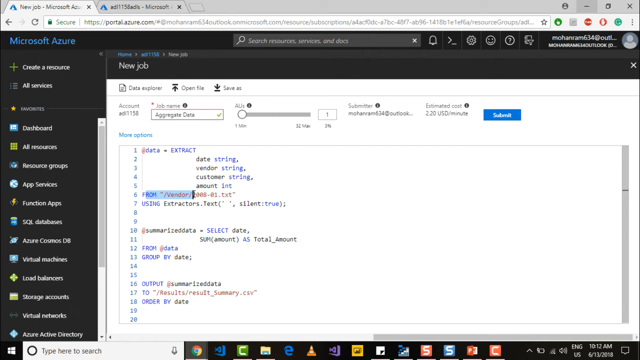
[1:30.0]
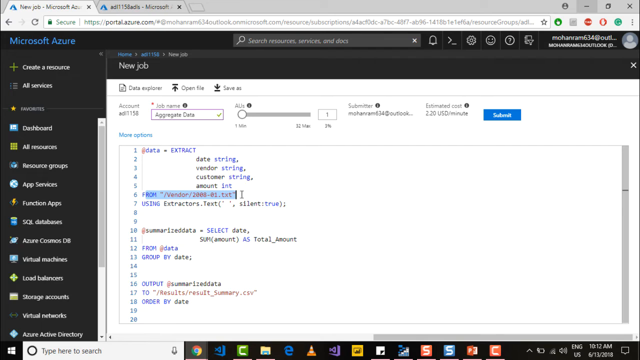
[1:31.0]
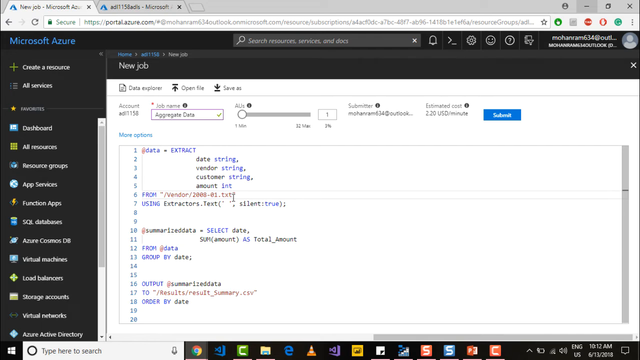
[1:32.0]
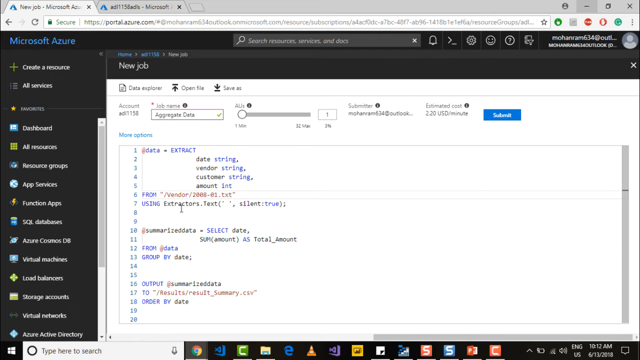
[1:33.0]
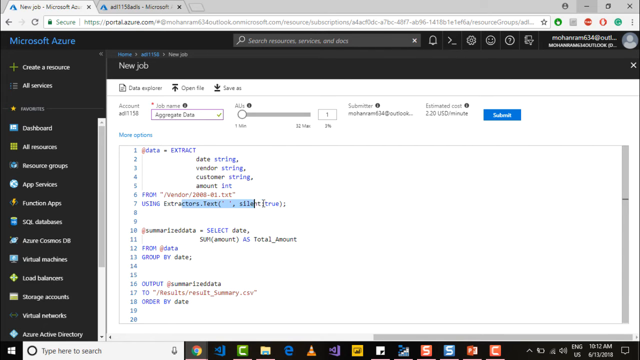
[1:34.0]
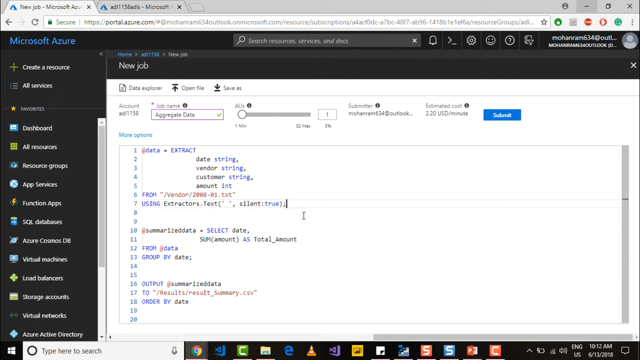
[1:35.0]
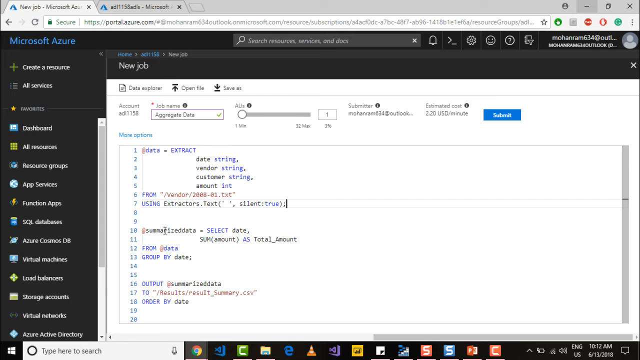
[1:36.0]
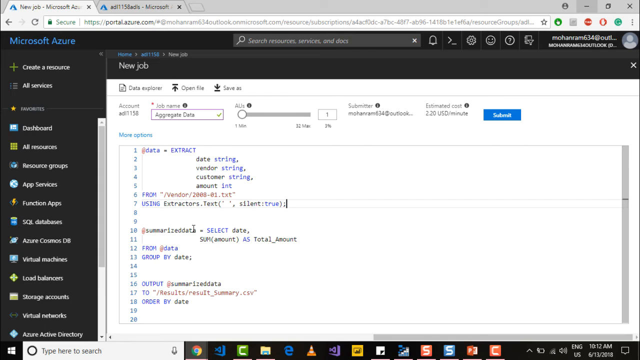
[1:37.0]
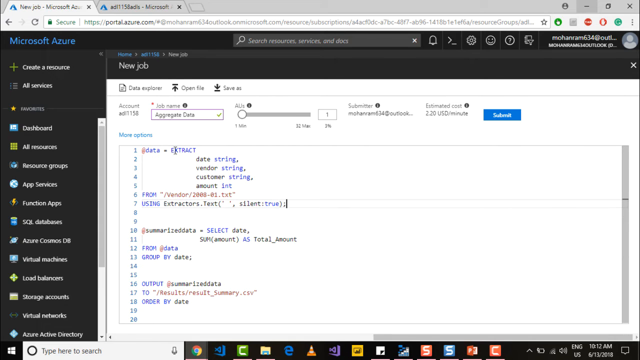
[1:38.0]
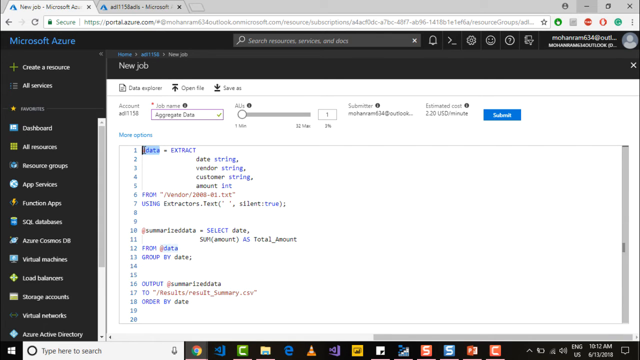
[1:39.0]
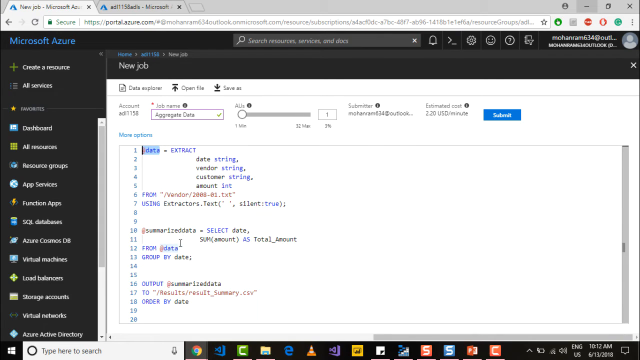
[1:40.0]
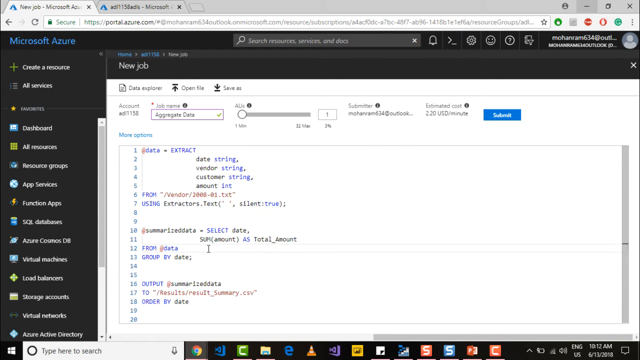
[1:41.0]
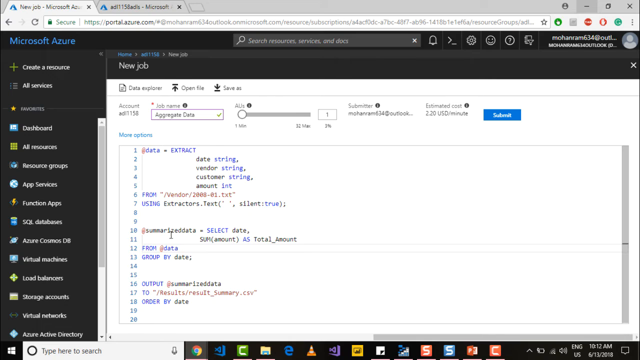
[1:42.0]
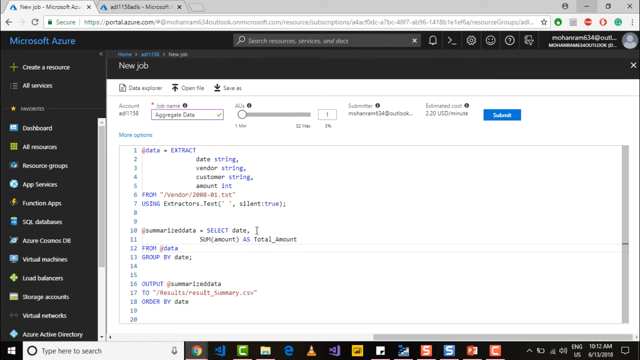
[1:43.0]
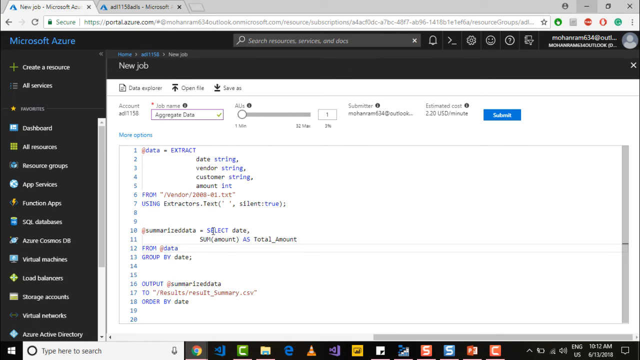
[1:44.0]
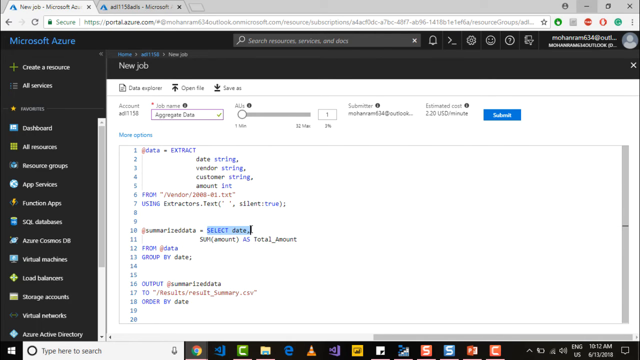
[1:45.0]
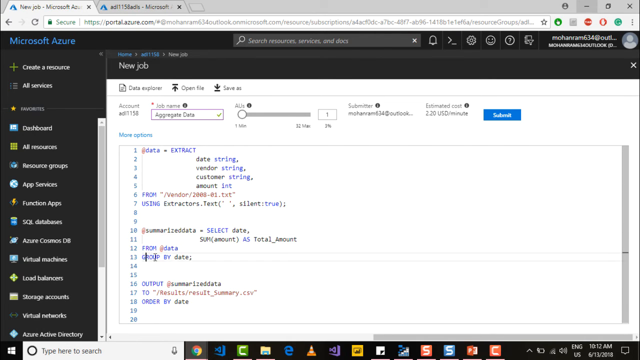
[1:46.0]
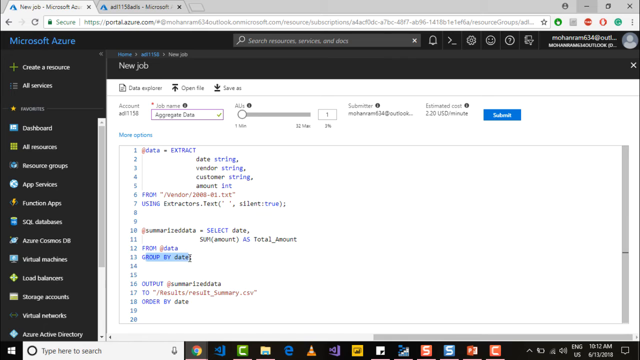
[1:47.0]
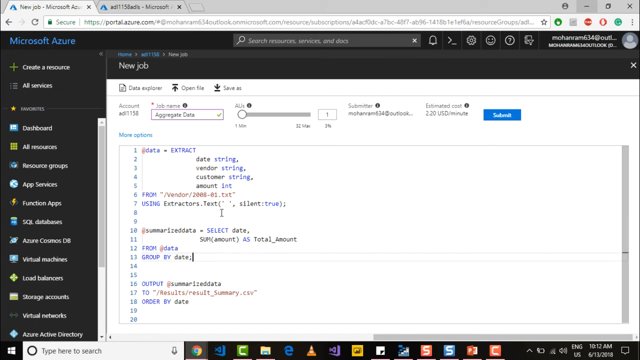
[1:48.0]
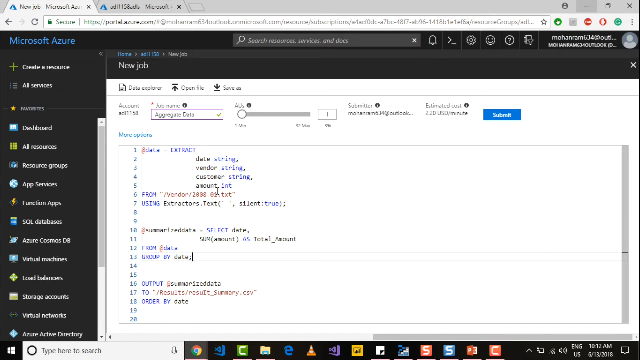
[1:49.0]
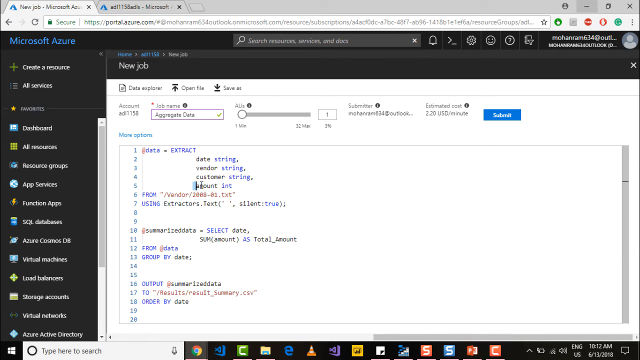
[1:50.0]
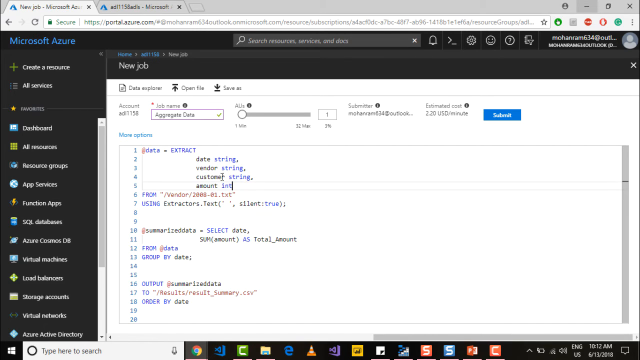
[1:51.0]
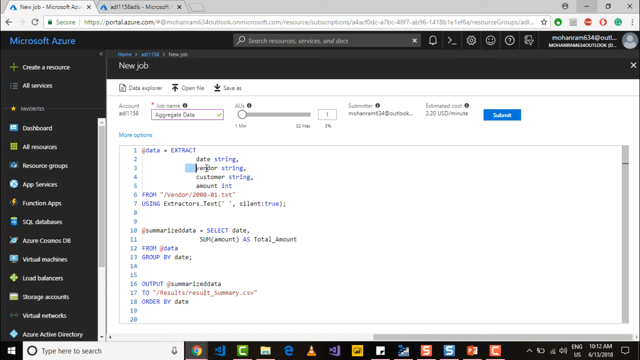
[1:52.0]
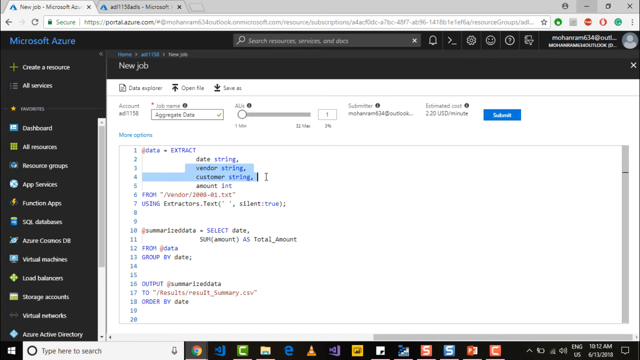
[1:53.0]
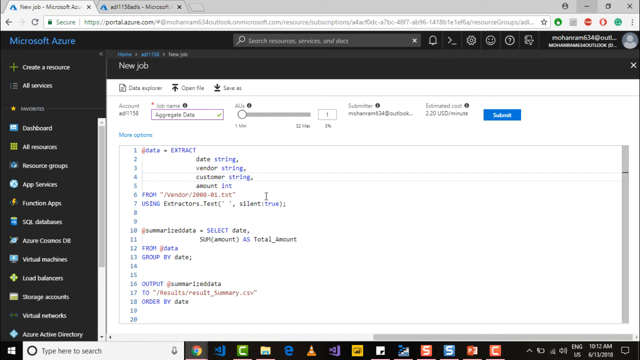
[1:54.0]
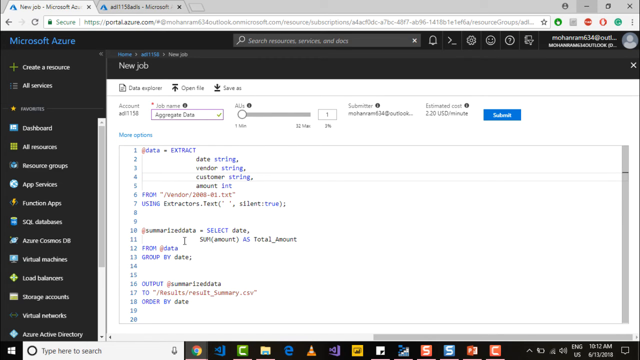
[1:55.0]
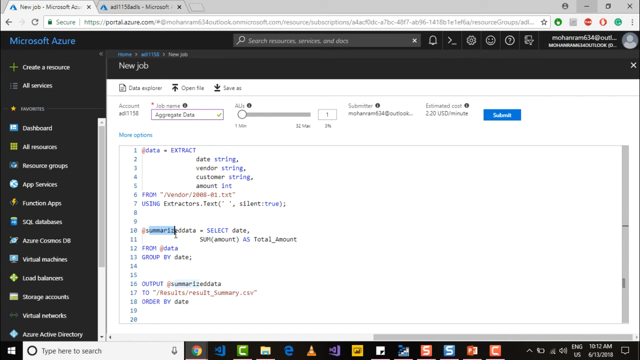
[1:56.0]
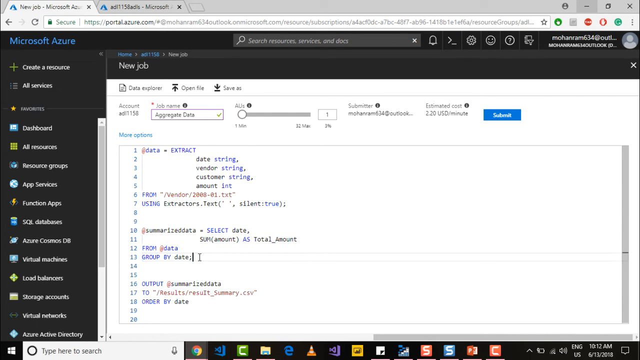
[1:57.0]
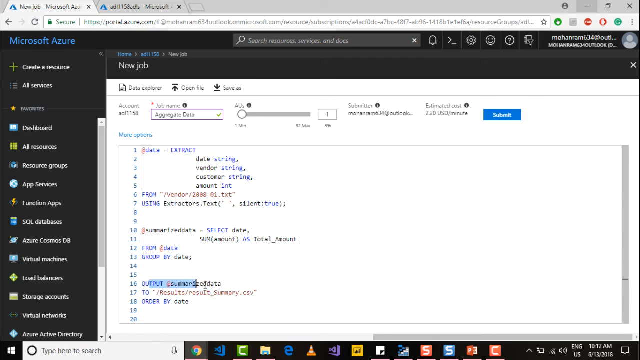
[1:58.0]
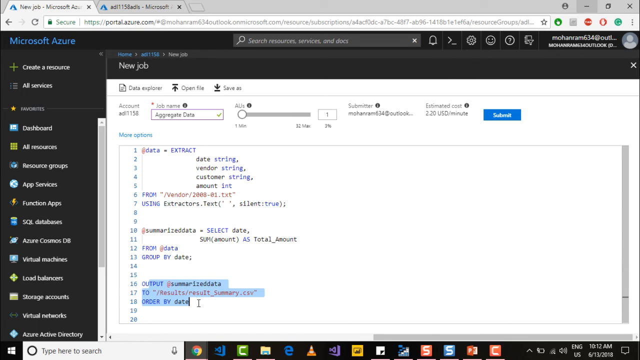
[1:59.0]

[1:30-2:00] The Microsoft Azure page is open. On the left side of the screen, against a black background, below Microsoft Azure, a menu lists options from top to bottom: a plus sign with "create a resource," "all services" with a small menu icon, "favorites" with a star, "dashboard," "all resources," "app services," "function apps," and at the bottom "load balances." The blue submit button is in the top right of the white page, and a profile user, not legible, is in the upper right corner.